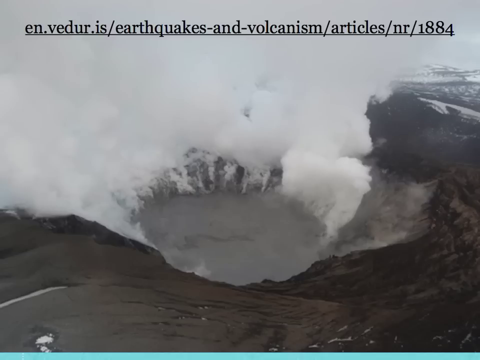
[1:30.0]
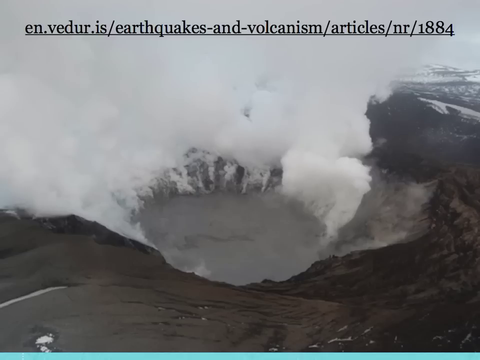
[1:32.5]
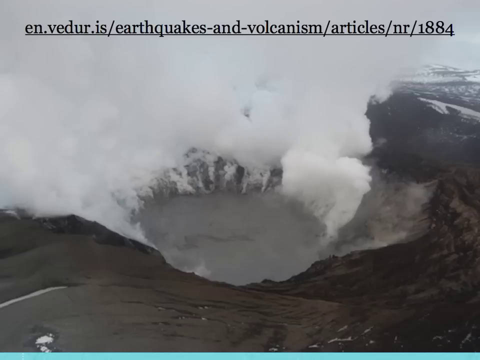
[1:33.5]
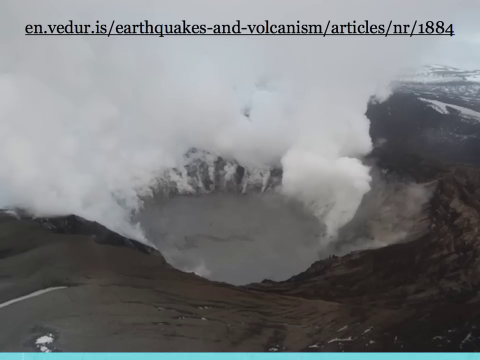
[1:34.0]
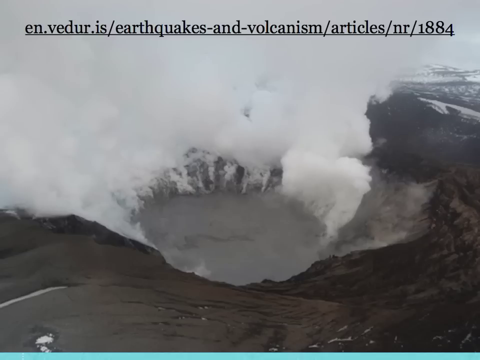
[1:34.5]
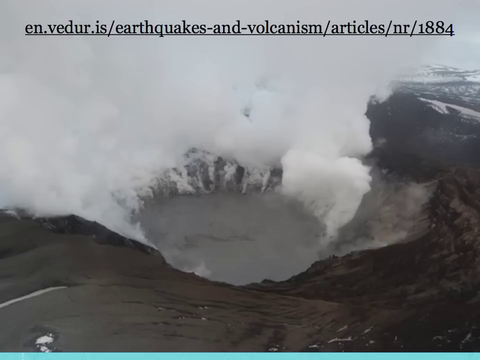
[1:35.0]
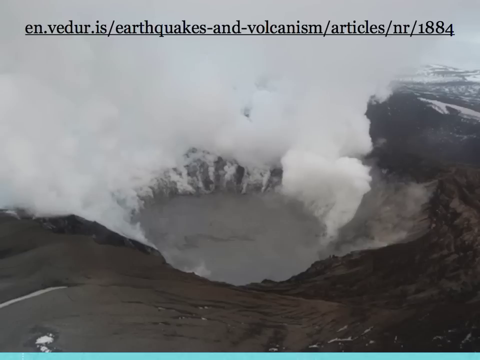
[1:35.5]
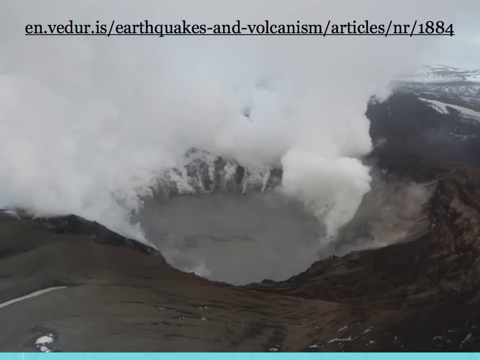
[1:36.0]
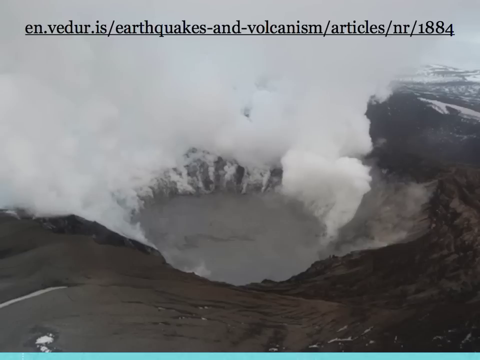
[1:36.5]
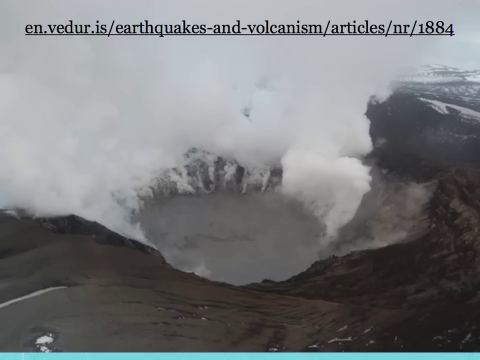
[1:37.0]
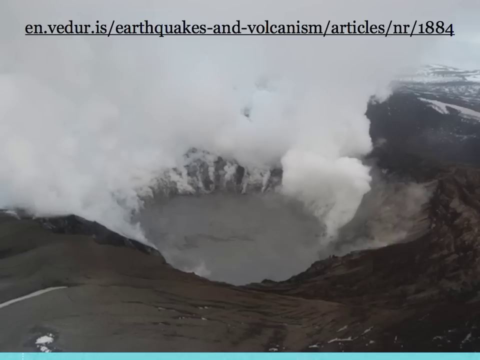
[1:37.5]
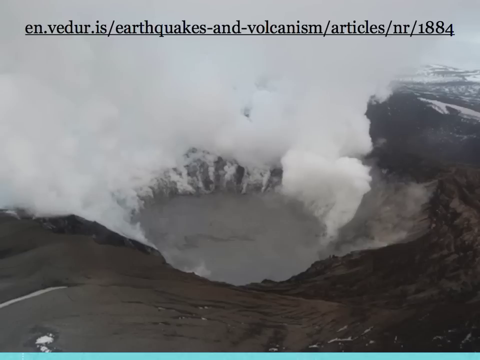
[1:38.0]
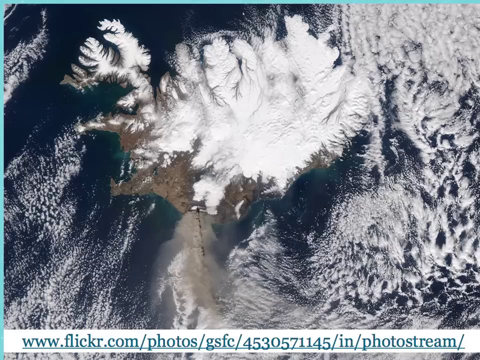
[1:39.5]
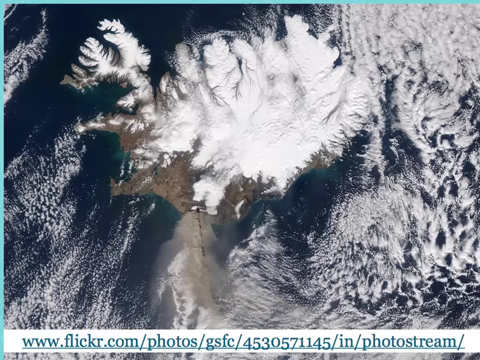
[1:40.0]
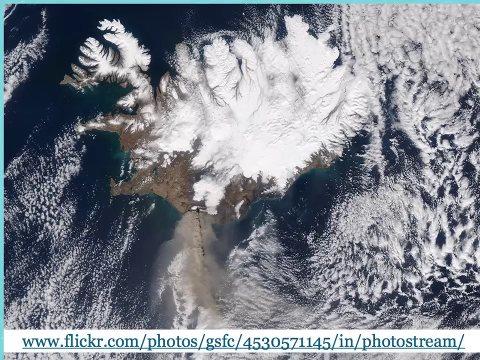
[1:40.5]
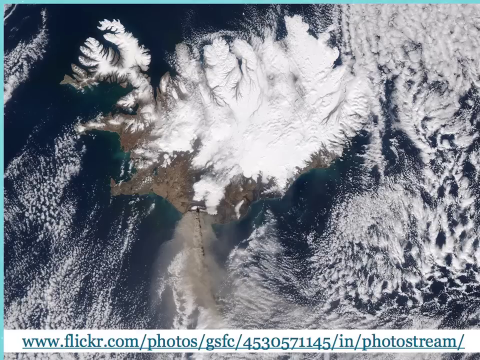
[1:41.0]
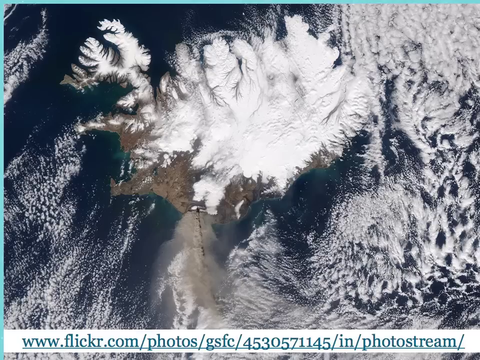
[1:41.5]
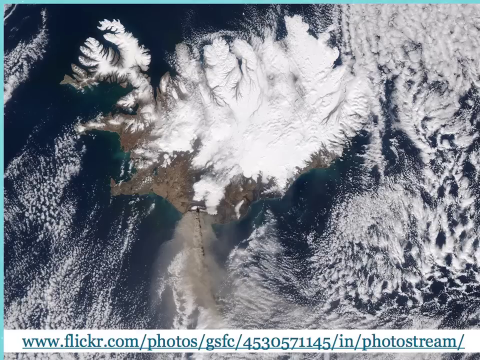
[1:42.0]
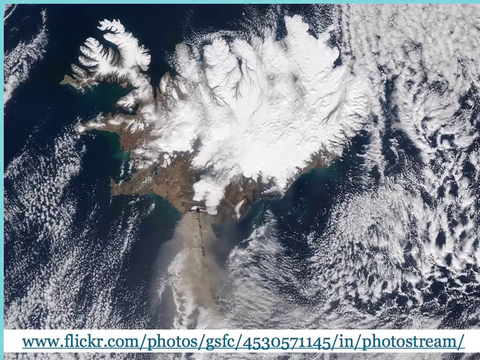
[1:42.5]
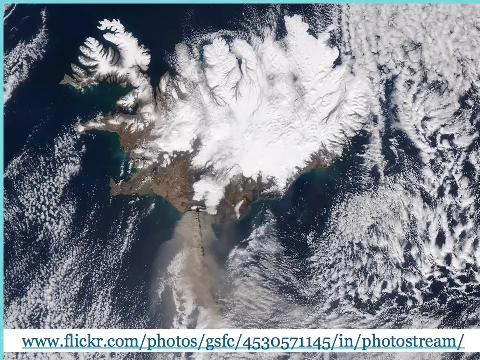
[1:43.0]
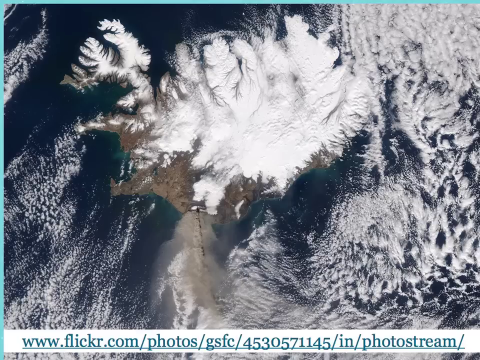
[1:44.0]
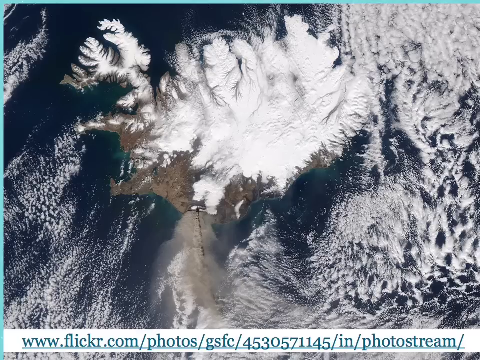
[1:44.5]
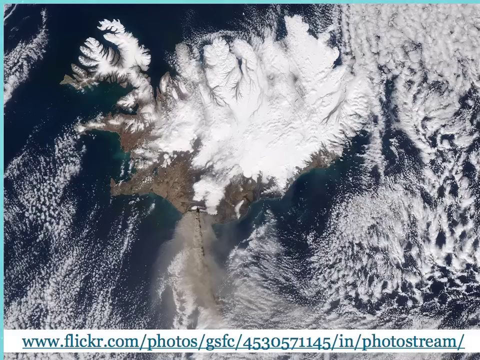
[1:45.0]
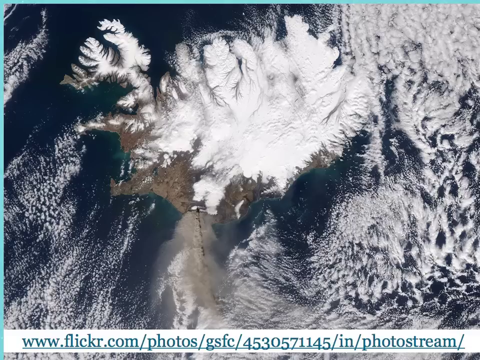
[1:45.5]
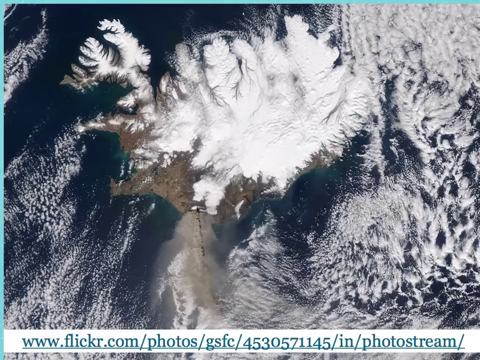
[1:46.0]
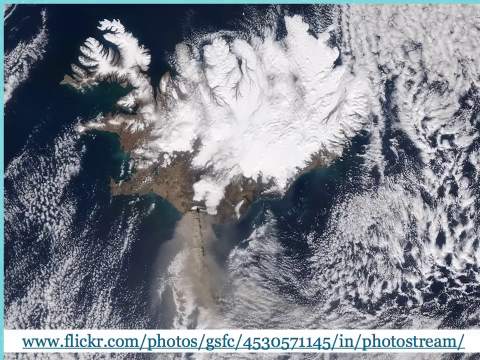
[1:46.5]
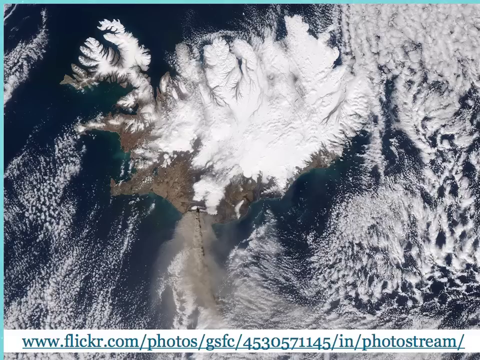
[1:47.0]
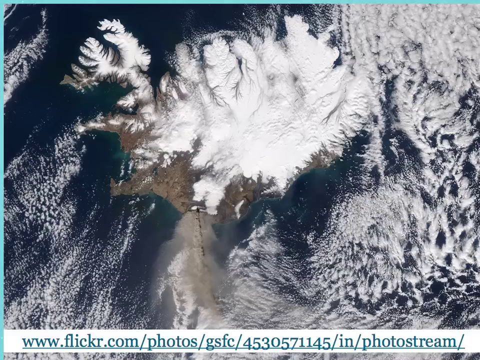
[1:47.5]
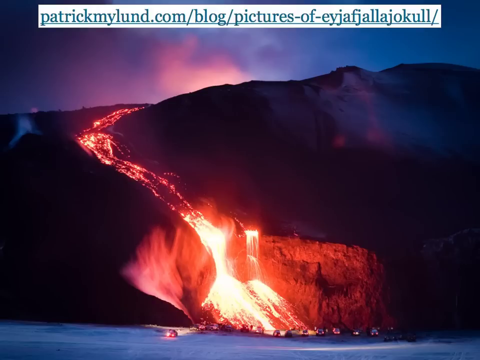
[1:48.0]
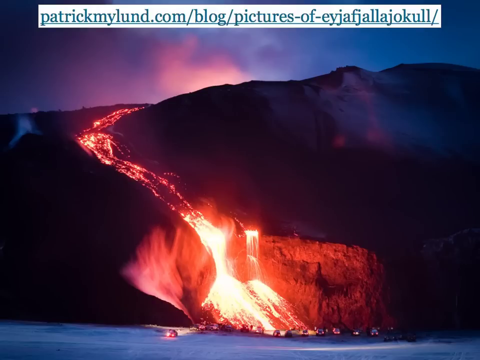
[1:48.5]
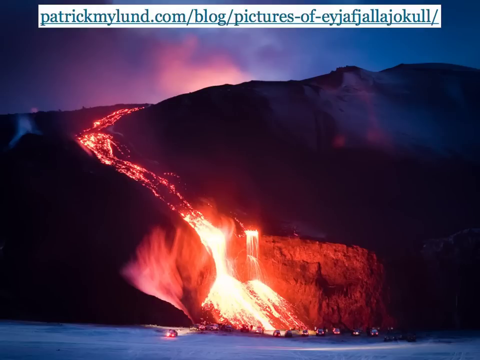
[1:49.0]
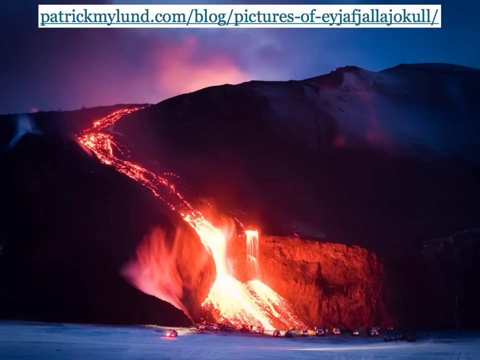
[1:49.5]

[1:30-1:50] A black and white photo shows a volcano, with white plumes of smoke coming out of the back of it. A circular middle shows the top of the volcano, and the ground around it is black. It then transitions to a second image that appears possibly to be a zoomed-out view from the sky. White clouds are visible, along with some blue or deep blue that might be the sky, or possibly water or the ground. In the middle of the image is thick white smoke coming from the volcano, and dark brown ground makes up the volcano at the top left and top middle of the image. The image then switches to a different view of the volcano, showing dark ground, probably black, with a lava flow coming from the back, at the top of the image. The lava flow is a very vibrant deep orange or red, coming down into a curve and creating a sort of very short lava waterfall, then continuing into a wider stream going downward in the middle of the image.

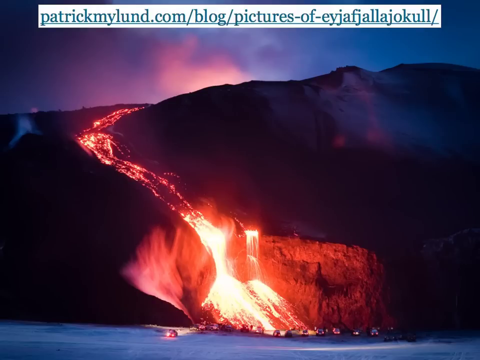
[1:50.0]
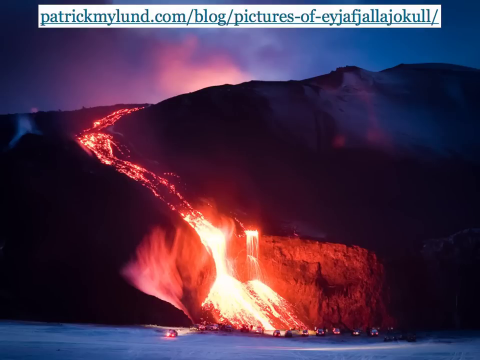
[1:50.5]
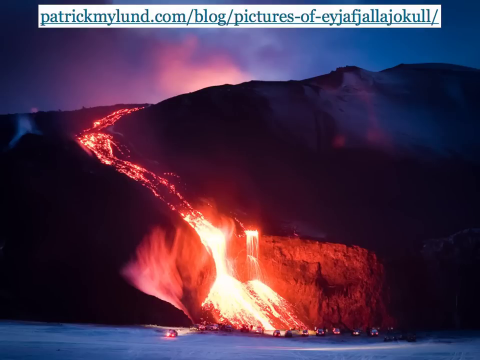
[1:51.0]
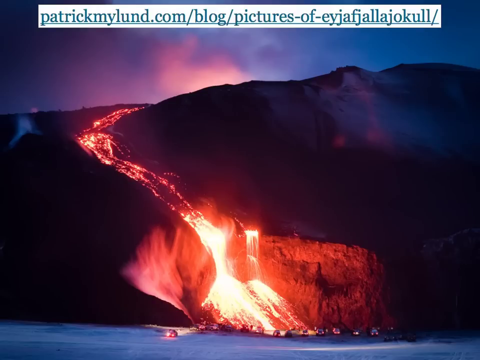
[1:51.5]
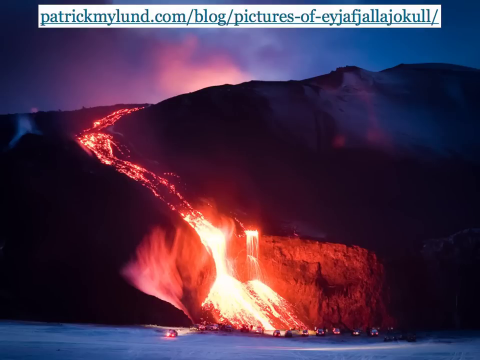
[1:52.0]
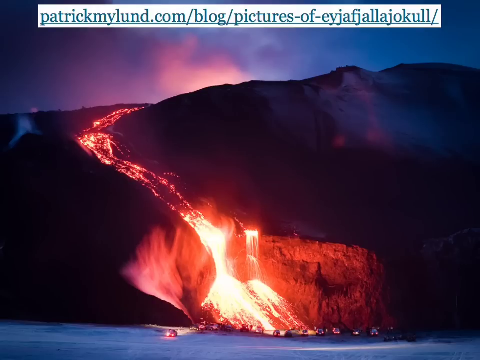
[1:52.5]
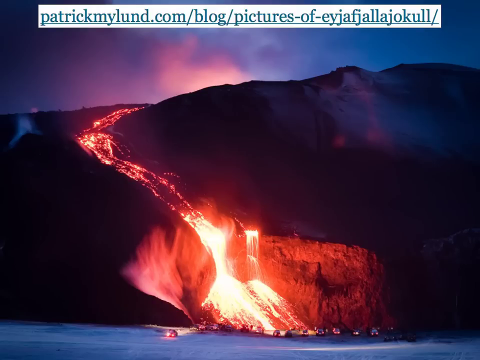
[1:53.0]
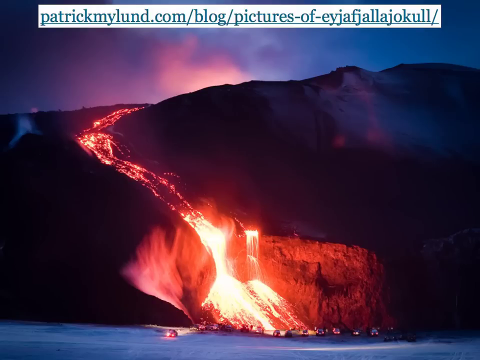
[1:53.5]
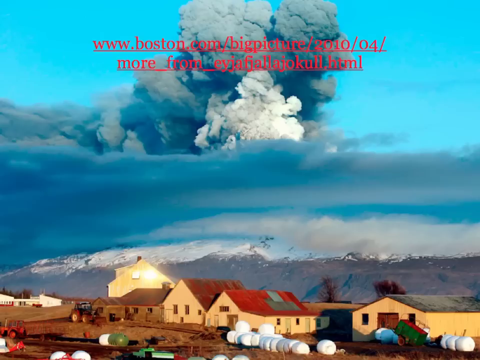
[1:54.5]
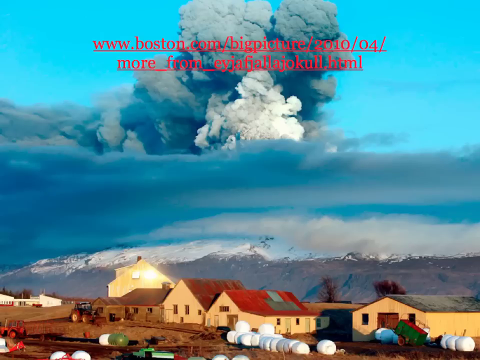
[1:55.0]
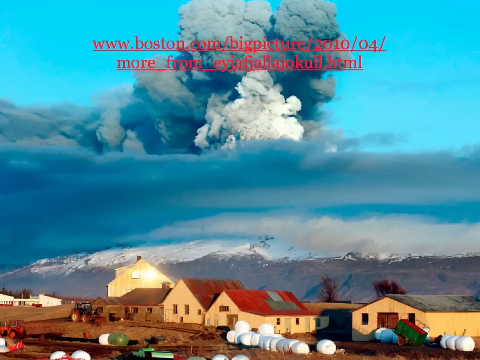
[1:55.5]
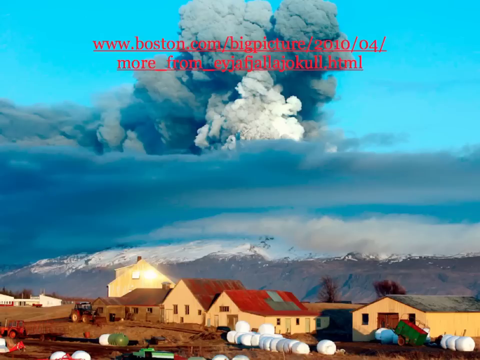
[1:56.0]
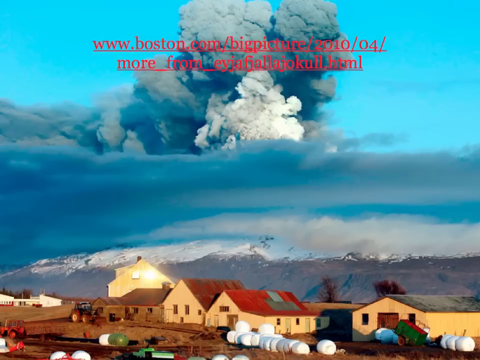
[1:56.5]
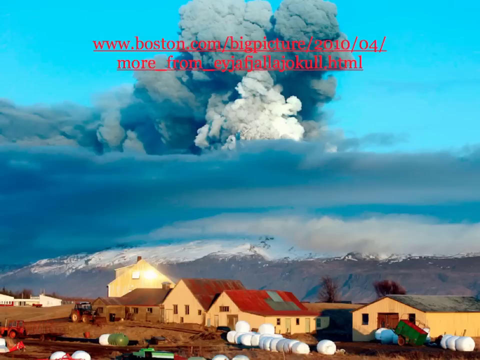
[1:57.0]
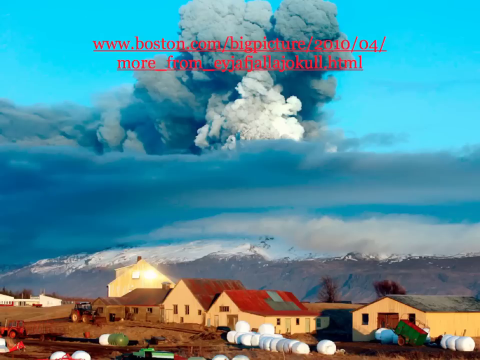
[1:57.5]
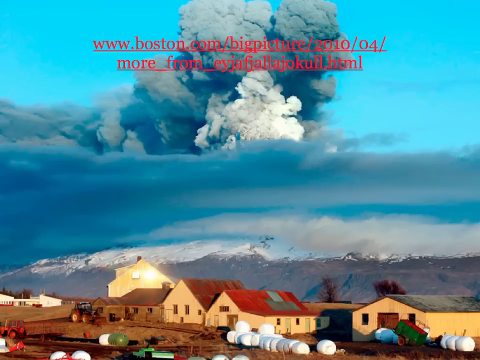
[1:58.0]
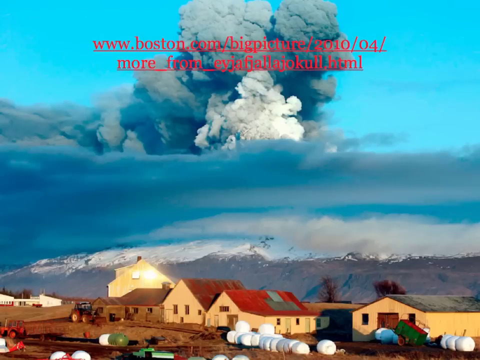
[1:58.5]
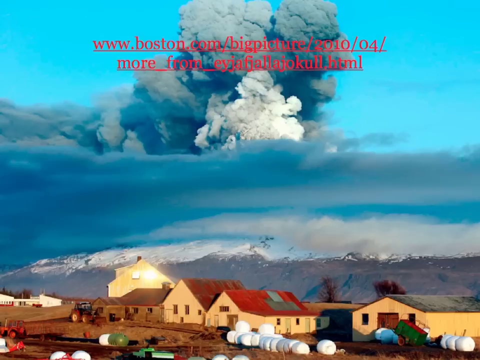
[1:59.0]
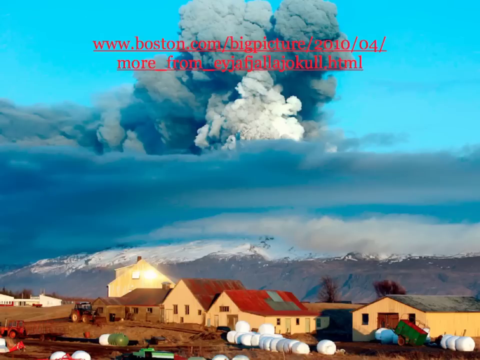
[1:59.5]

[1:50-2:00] An image of a volcano shows black ground on either side, and coming from the background at the top left is a vibrant orange-red lava flow moving forward in the picture, curving toward the middle, then going down a short waterfall of lava into a larger stream of lava moving downward out of the image. A new image then appears showing plumes of white and dark grey smoke in the background, in stark contrast to the otherwise light blue sky. Other thick clouds are in front of this, and some mountains with snow on top are behind what appears to be a row of houses below the clouds. This is possibly a village located very close to where the volcano is seen. The houses appear to be all one or two stories, and the area seems like it could possibly be farmland.